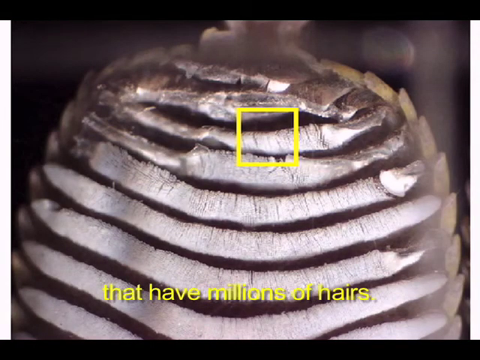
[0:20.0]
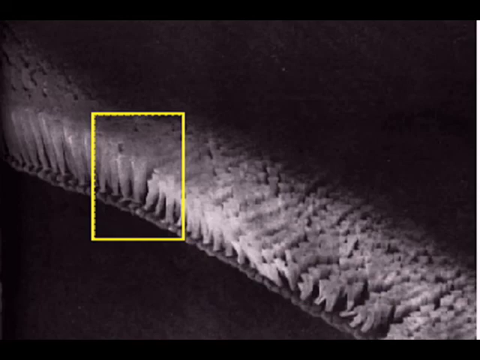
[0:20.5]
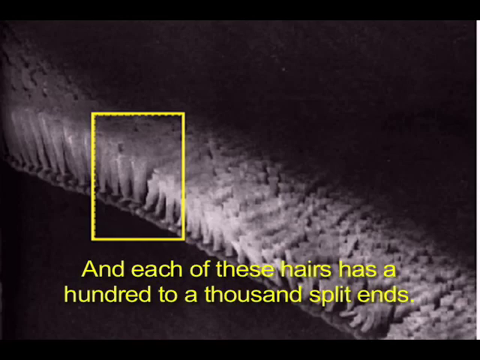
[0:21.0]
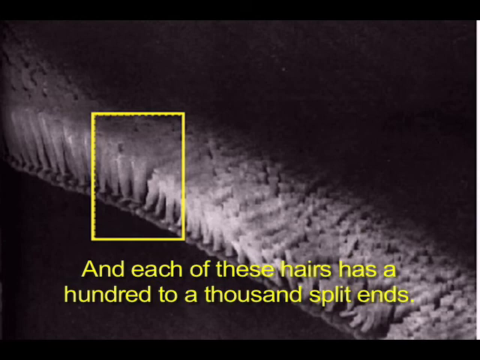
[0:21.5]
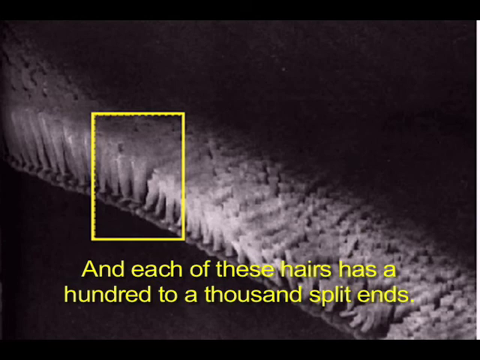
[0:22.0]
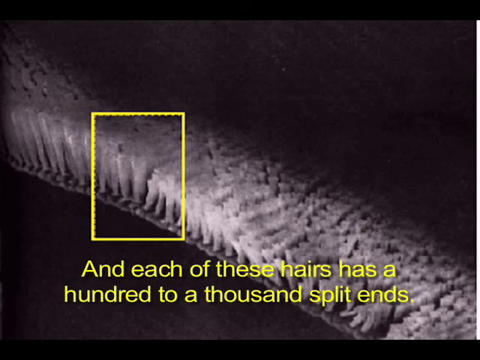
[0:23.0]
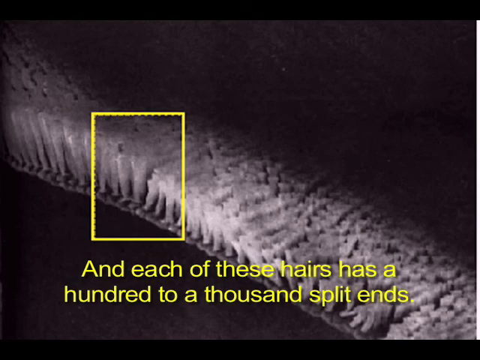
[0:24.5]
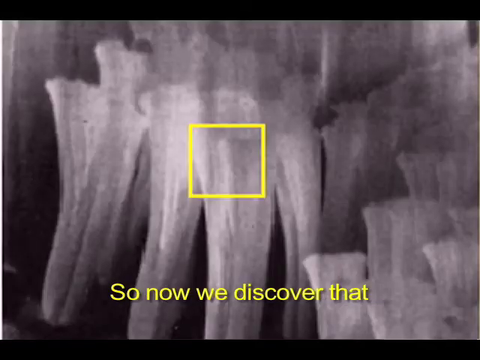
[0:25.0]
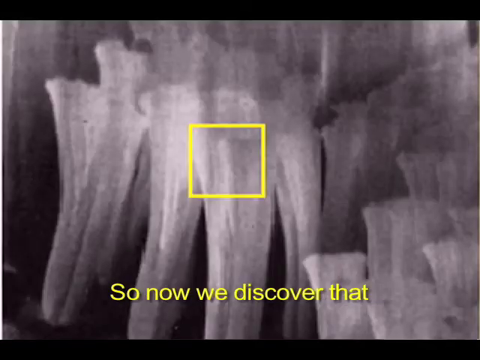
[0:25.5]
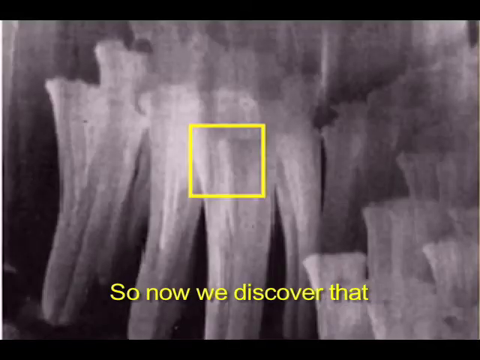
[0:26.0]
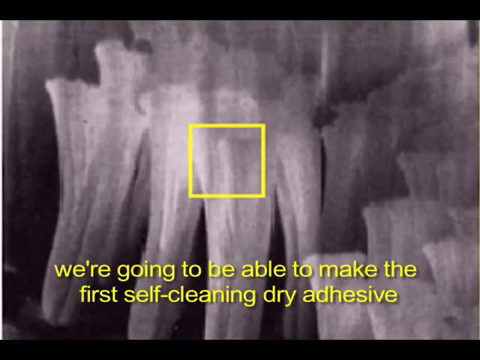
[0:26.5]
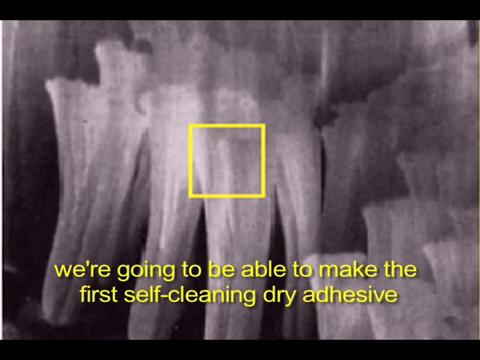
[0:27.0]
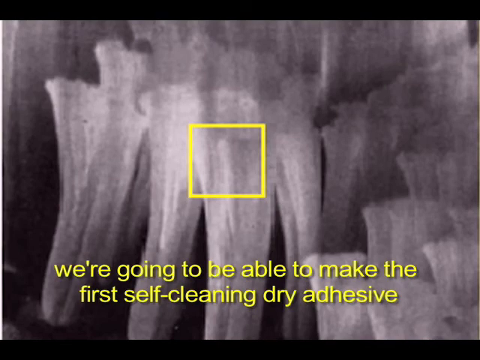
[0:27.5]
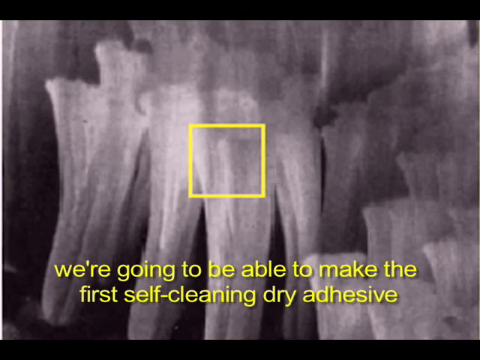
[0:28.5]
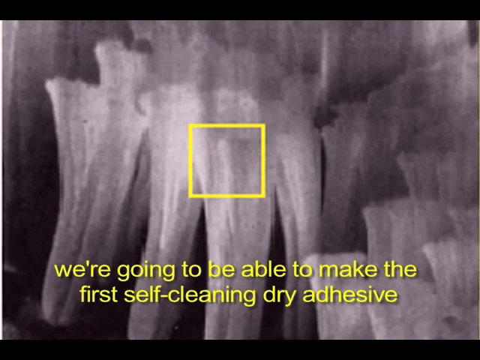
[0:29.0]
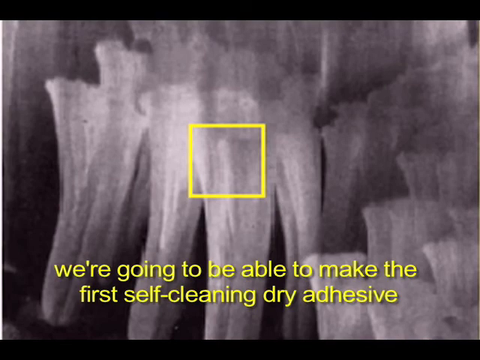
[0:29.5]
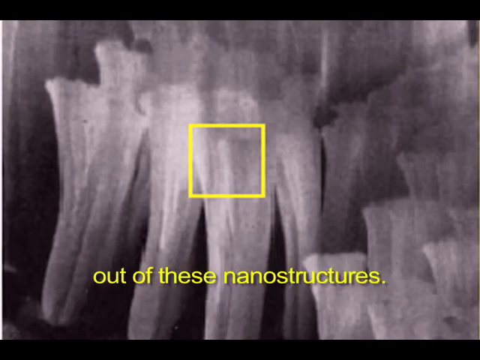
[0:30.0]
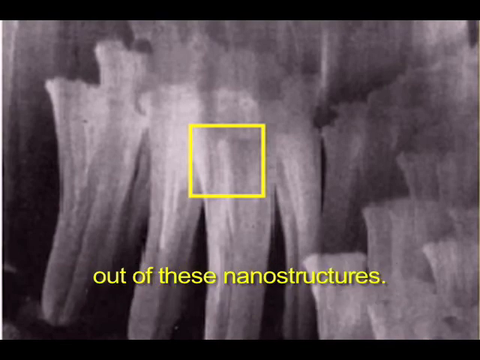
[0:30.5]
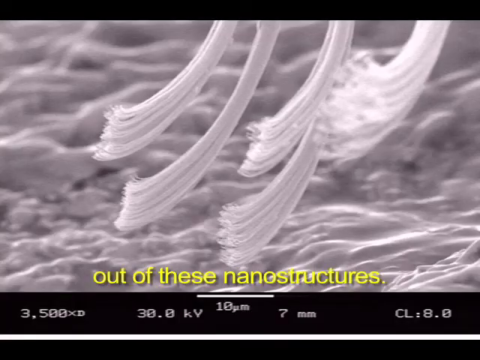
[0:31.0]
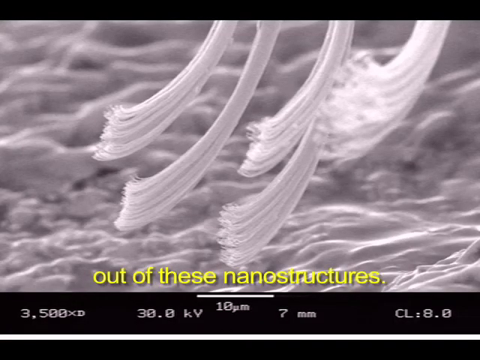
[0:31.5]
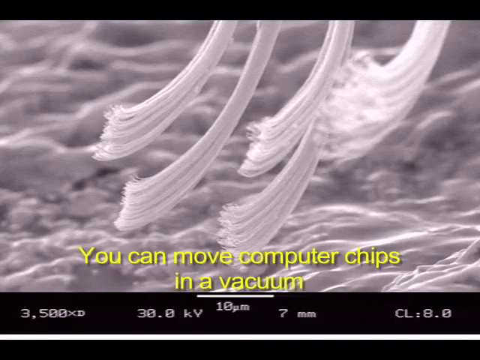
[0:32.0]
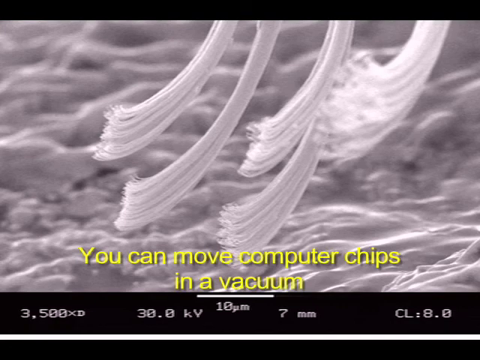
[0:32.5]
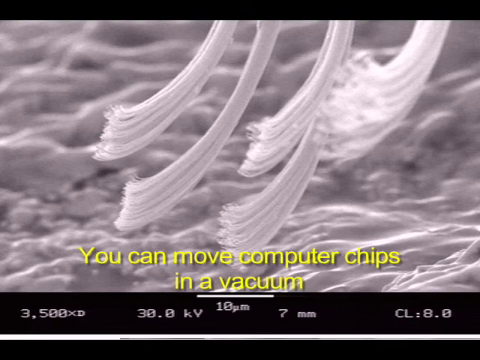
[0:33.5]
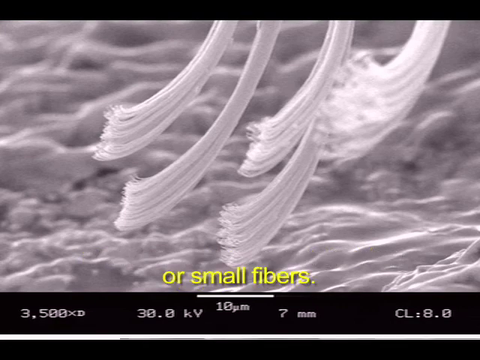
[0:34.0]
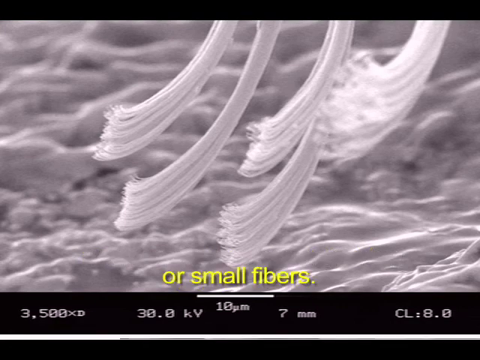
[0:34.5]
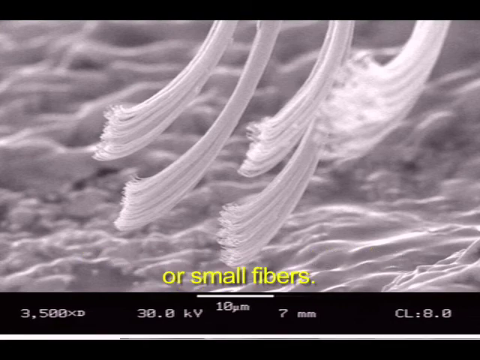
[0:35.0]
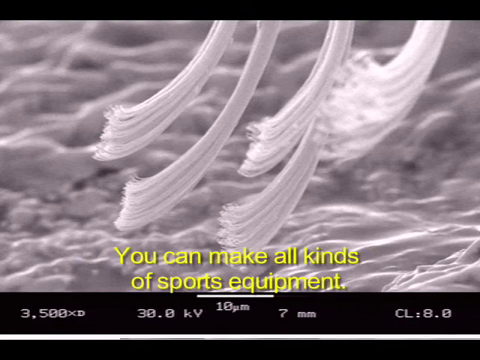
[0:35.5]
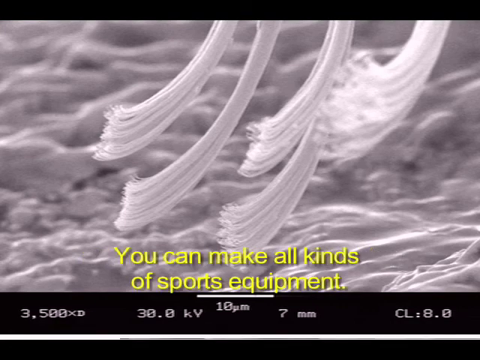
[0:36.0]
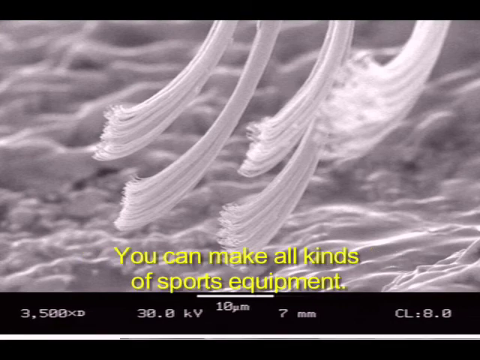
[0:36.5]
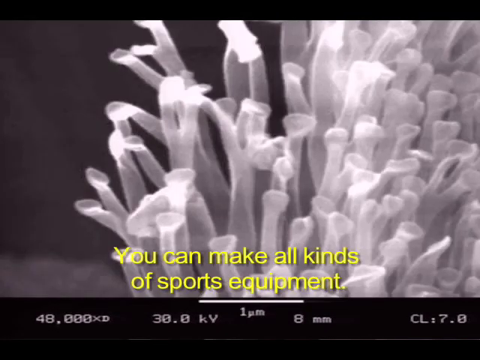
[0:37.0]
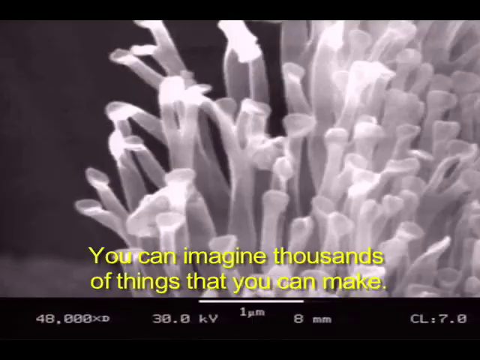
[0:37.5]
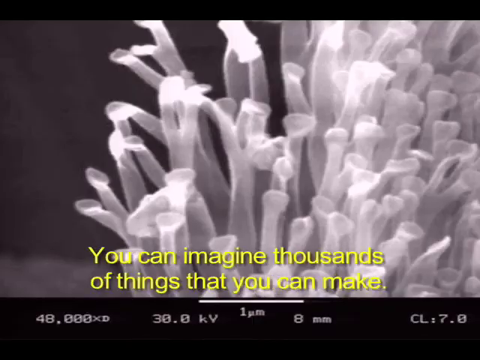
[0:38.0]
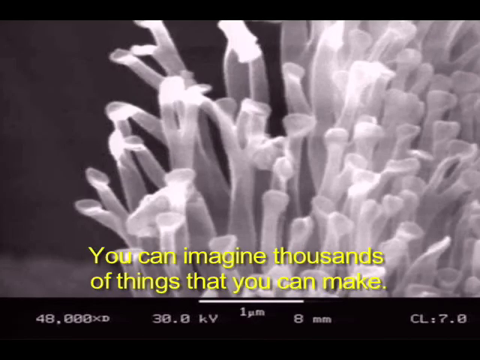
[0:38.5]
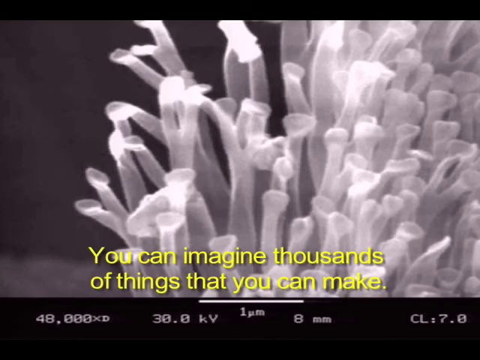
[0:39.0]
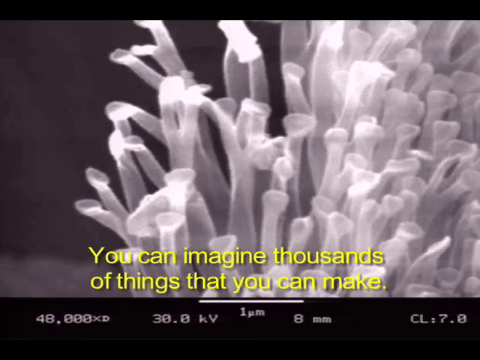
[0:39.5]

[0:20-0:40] Yellow words appear on the screen, beginning "and each of these hairs has" before skipping ahead; the text flashes by so quickly, for a fraction of a second, that it can only be read by pausing. Some type of bristles is shown up close, looking like nylon bristles. Yellow words read "we're going to be able to make the first self-cleaning dry adhesive," followed by "out of these nanostructures." Then the text reads "you can move computer chips and a vacuum," then "or small fibers," and "you can make all kinds of sports equipment." A different close-up of bristles follows, with "you can imagine thousands of things that you can make." The video then swirls around and the segment ends.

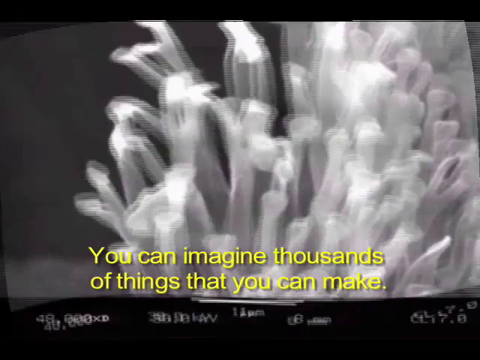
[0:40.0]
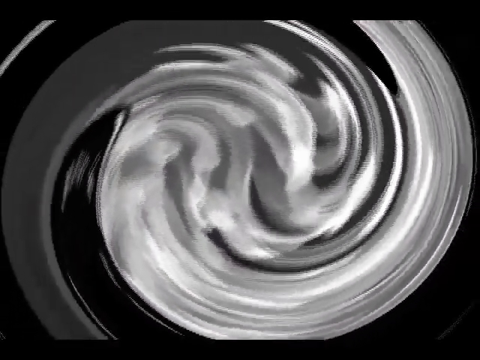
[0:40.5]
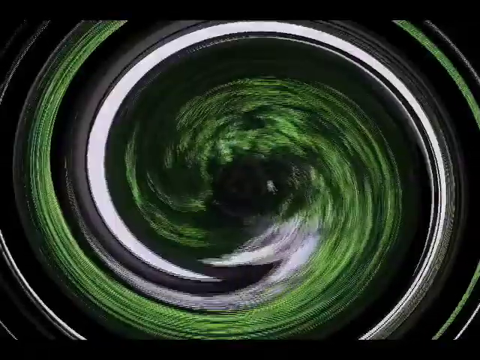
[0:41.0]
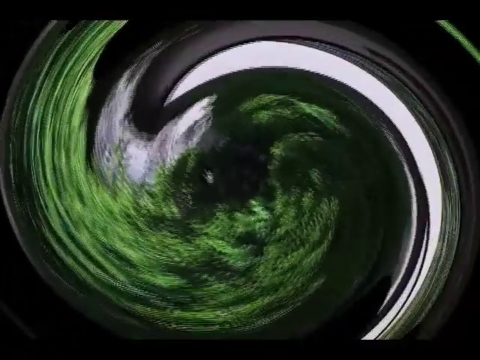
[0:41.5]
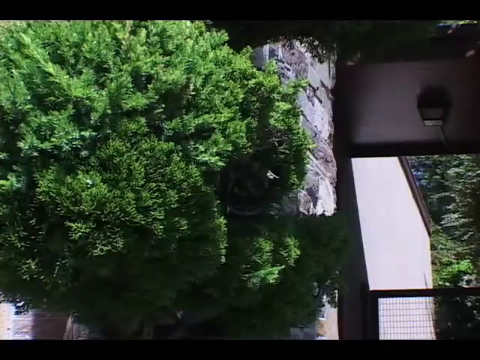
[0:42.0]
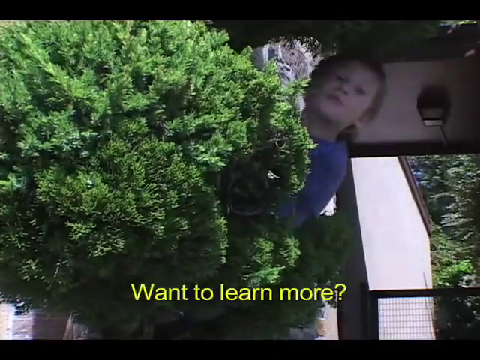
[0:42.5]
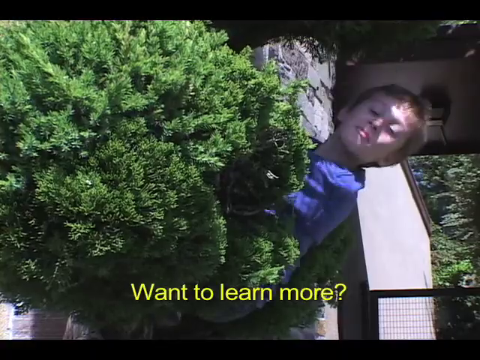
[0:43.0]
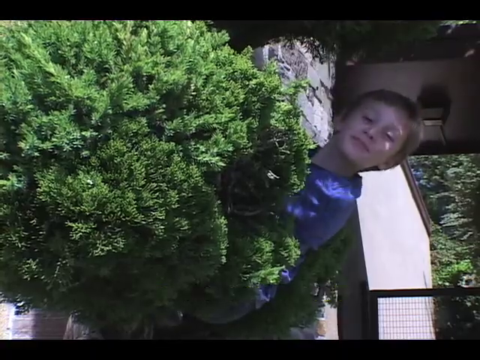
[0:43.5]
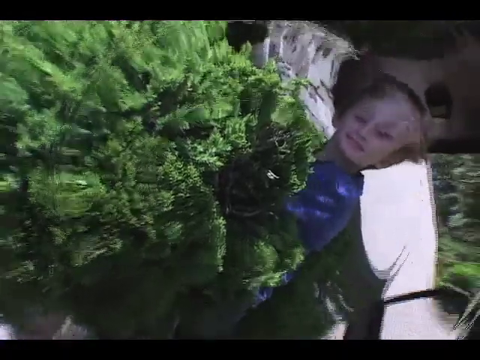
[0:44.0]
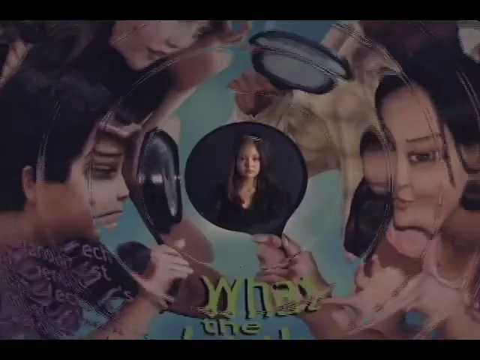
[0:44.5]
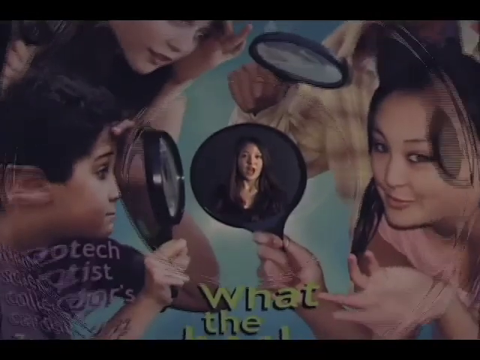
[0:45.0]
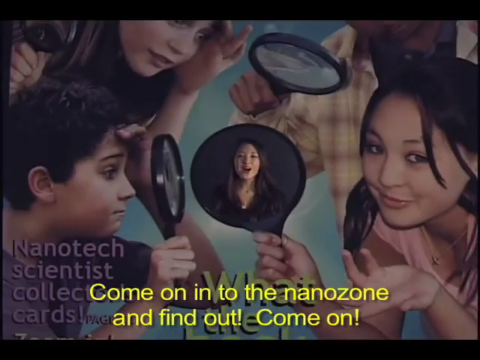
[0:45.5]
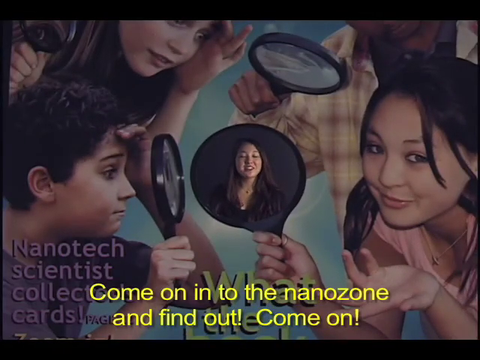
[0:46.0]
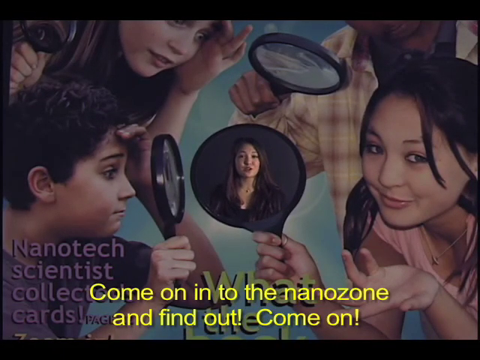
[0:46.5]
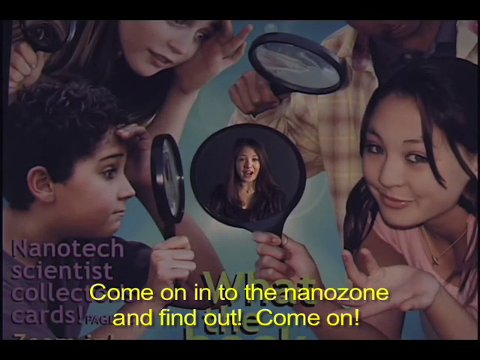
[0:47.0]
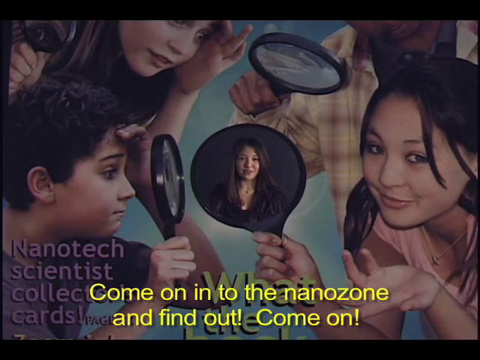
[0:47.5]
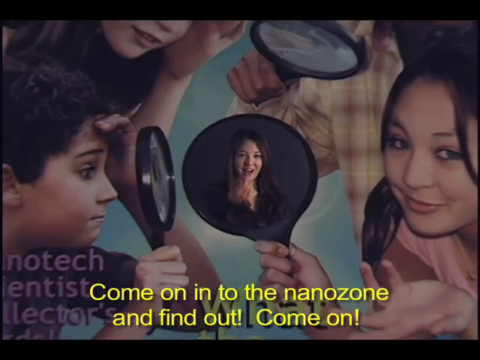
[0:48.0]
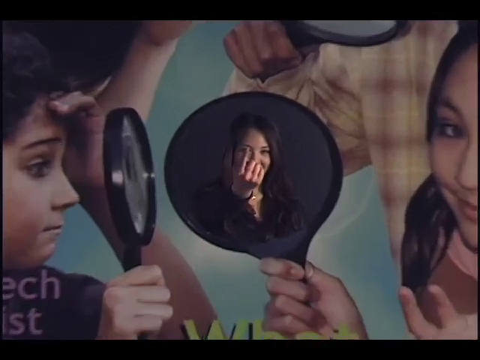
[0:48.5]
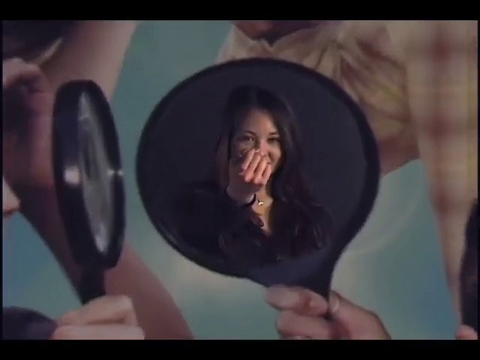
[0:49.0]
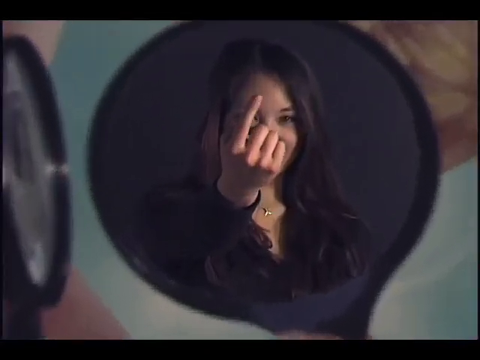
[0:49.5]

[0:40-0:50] A photo swirls, and then the little boy pokes his head out from behind a bush. He wears a blue shirt and looks like he is in front of an apartment building, while yellow words read "want to learn more?" The picture morphs into another picture of four kids holding magnifying glasses, except one that looks more like a paddle. Inside the paddle held by the girl on the right is a moving video, probably superimposed where a magnifying glass once was, showing a gray background and a woman with brown hair and a gray shirt. Yellow text reads "come on in to the nano zone and find out! come on," and on the left side text reads "nanotech scientist collection." The woman is talking; she points her finger out and makes a come-here motion, her mouth seeming to form the words "come here," as the video zooms in on her and then stops.